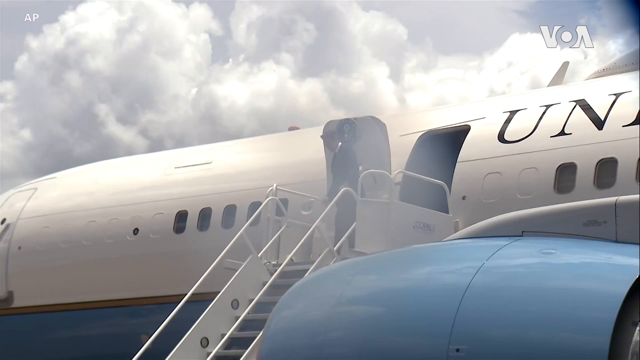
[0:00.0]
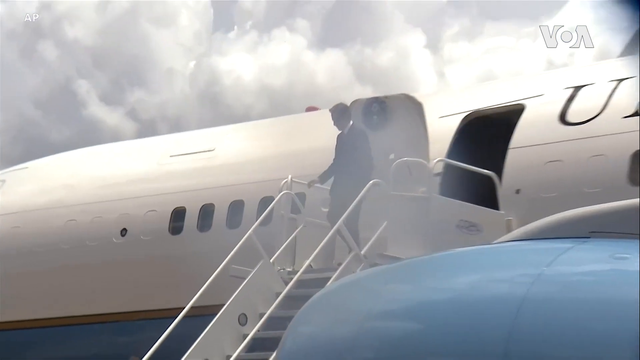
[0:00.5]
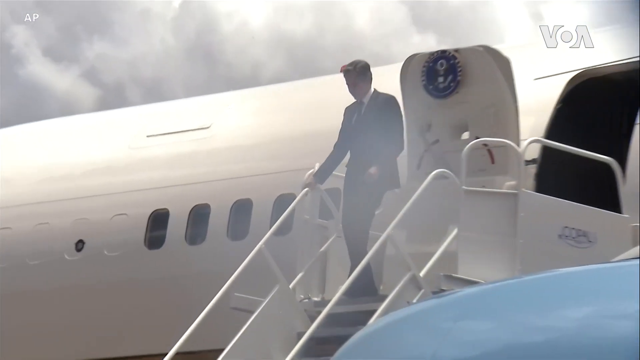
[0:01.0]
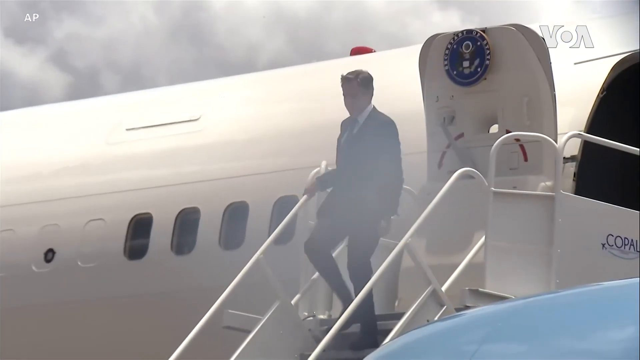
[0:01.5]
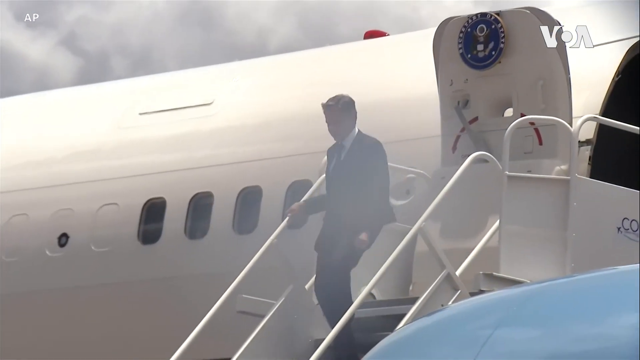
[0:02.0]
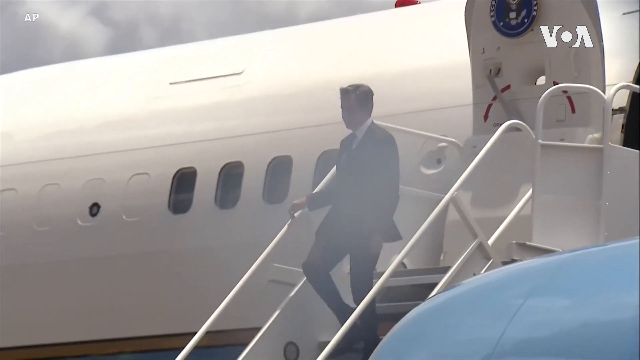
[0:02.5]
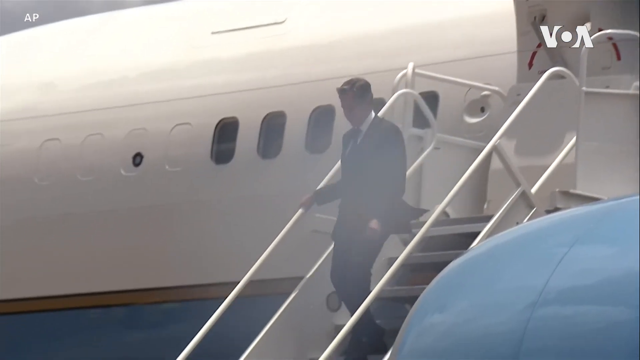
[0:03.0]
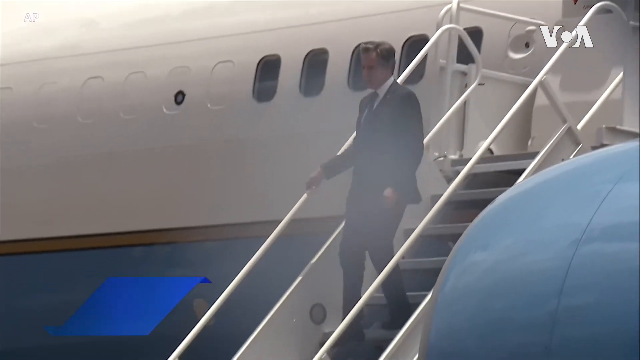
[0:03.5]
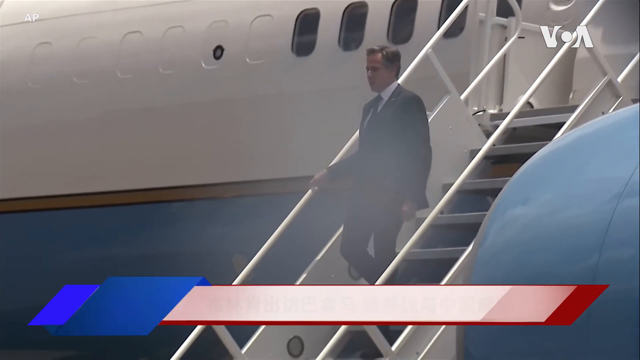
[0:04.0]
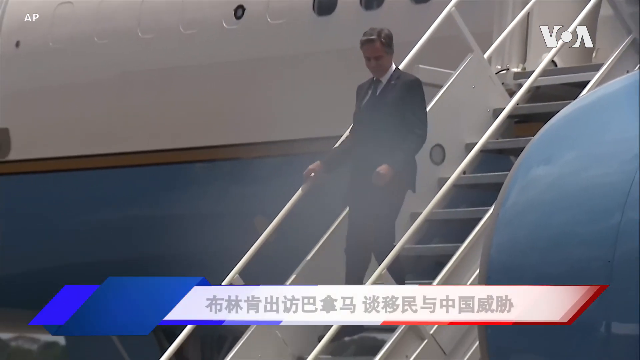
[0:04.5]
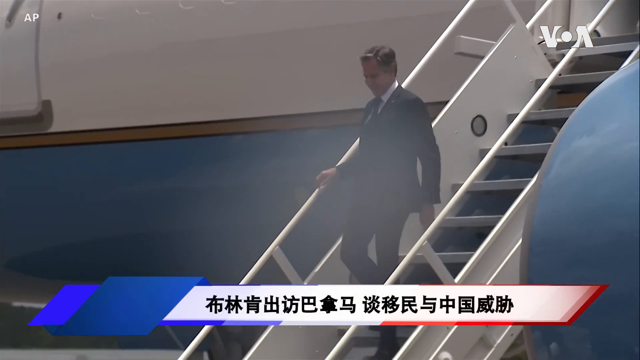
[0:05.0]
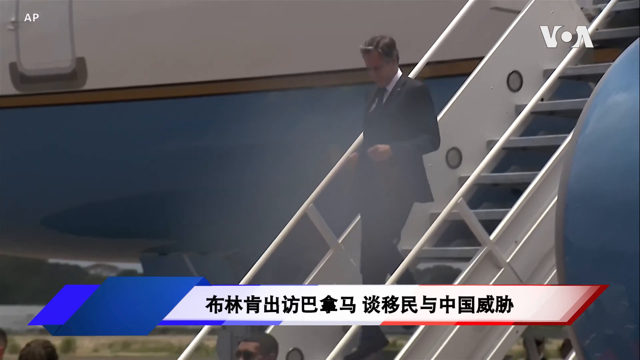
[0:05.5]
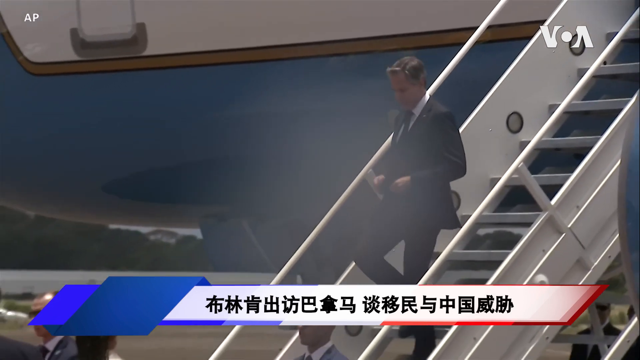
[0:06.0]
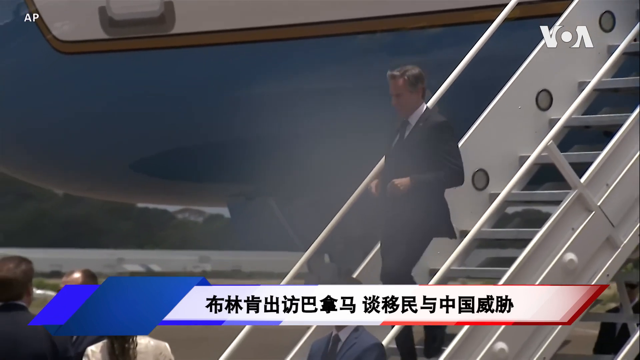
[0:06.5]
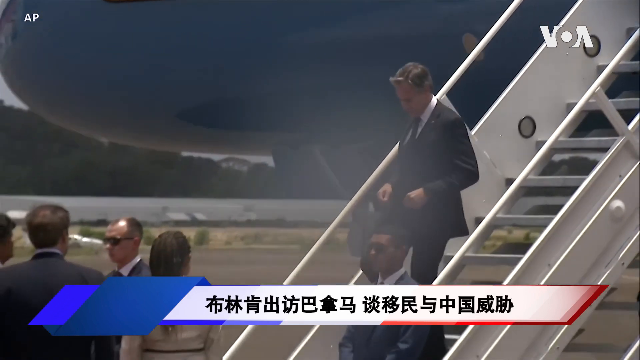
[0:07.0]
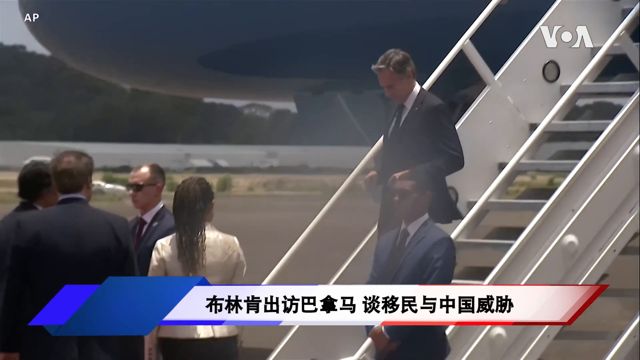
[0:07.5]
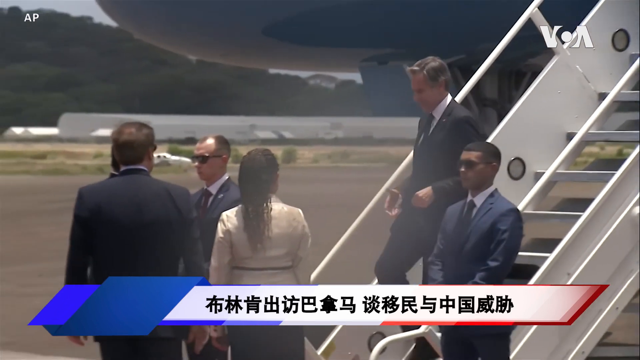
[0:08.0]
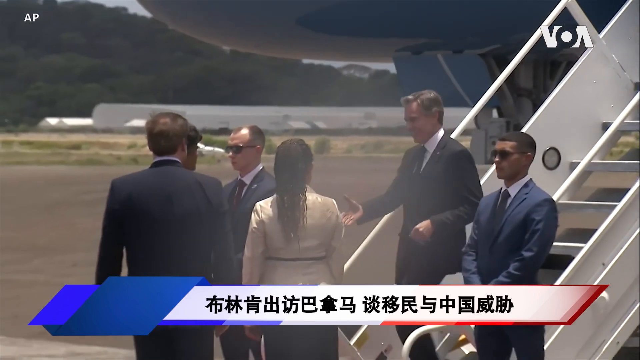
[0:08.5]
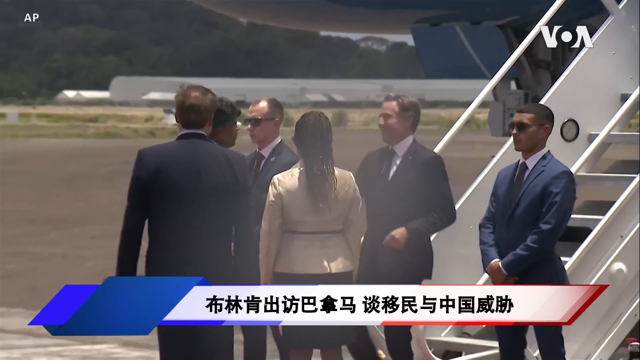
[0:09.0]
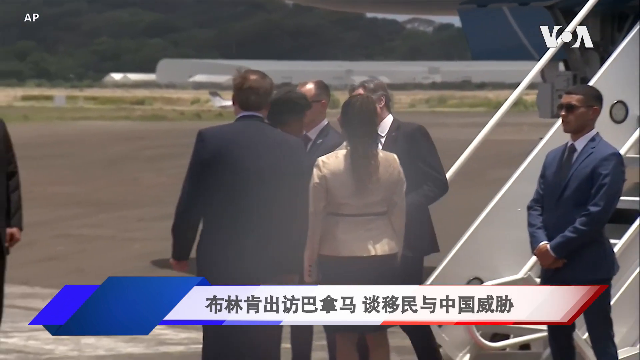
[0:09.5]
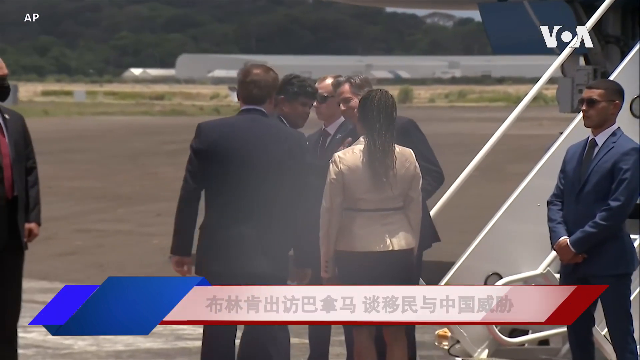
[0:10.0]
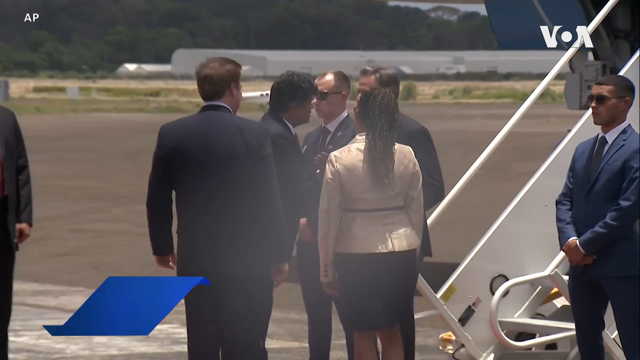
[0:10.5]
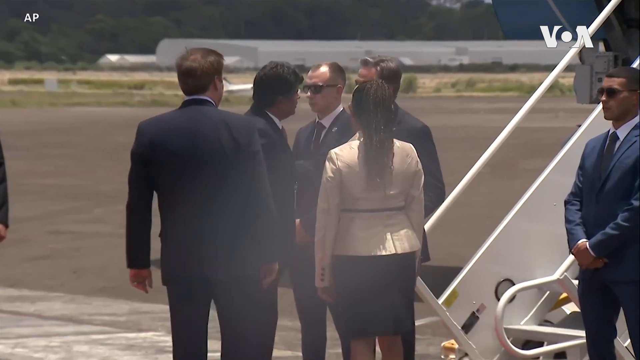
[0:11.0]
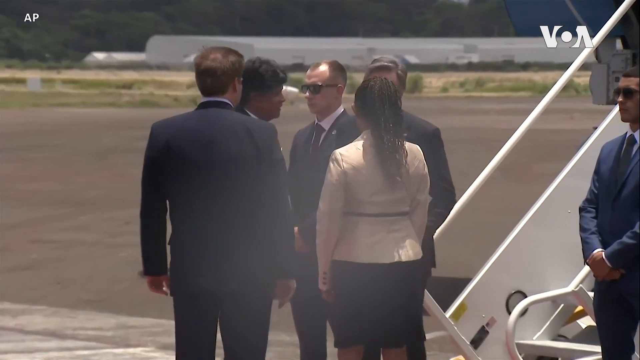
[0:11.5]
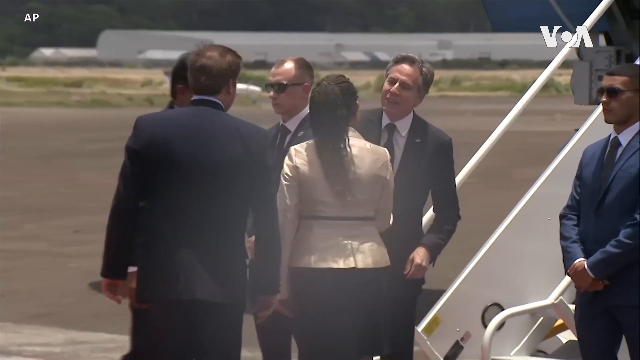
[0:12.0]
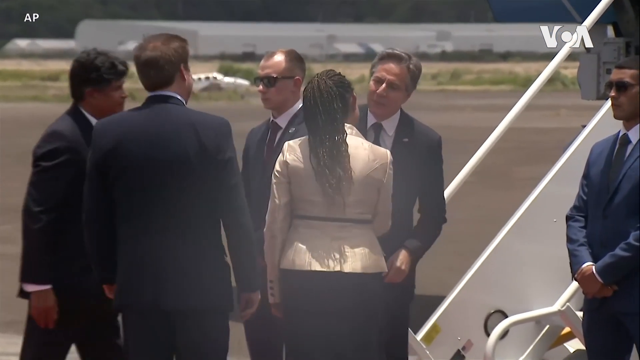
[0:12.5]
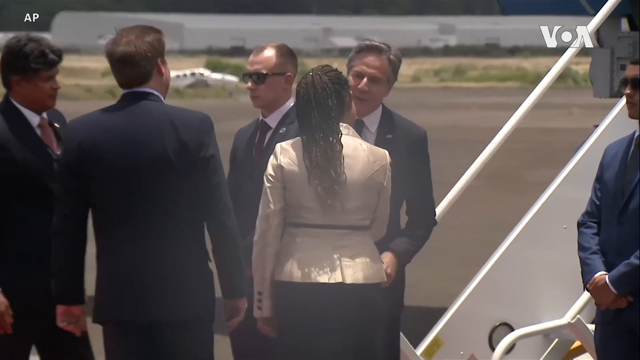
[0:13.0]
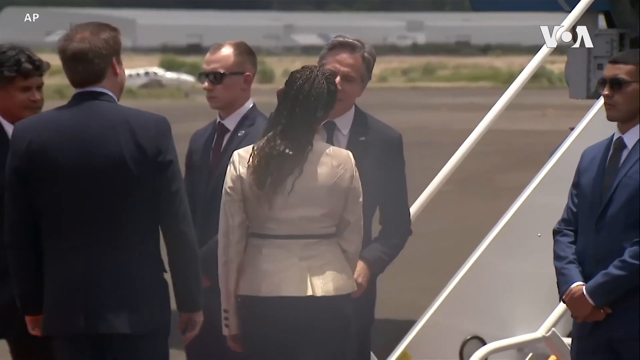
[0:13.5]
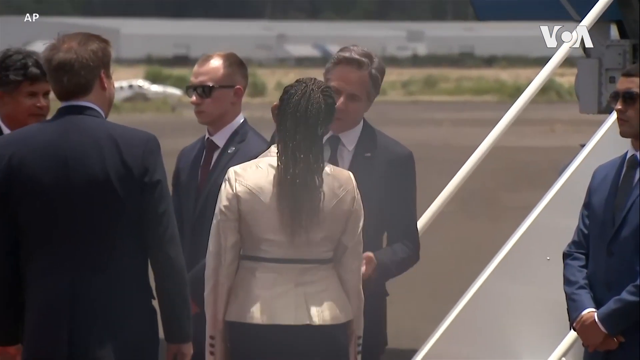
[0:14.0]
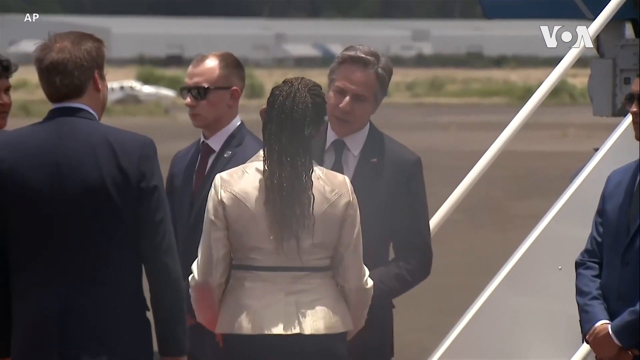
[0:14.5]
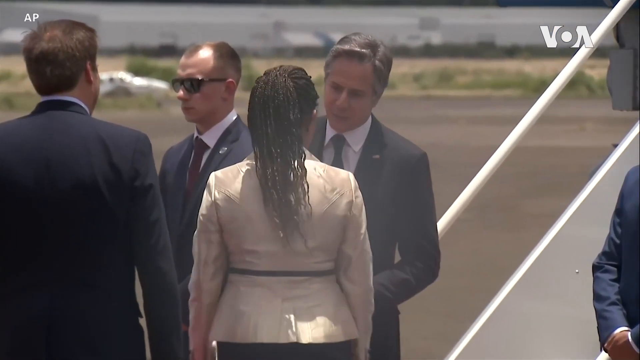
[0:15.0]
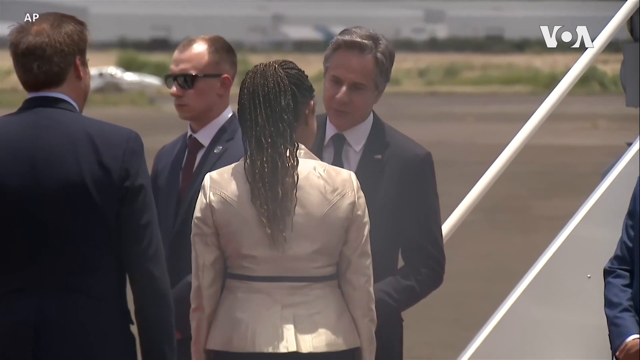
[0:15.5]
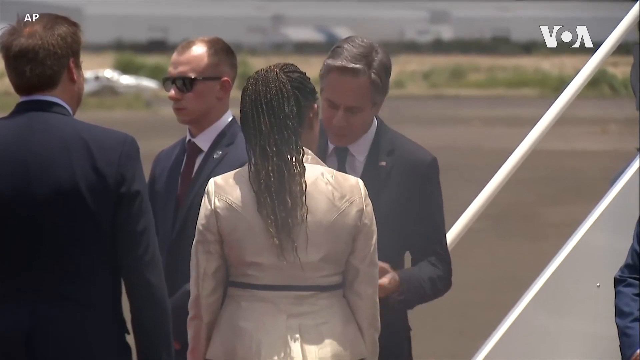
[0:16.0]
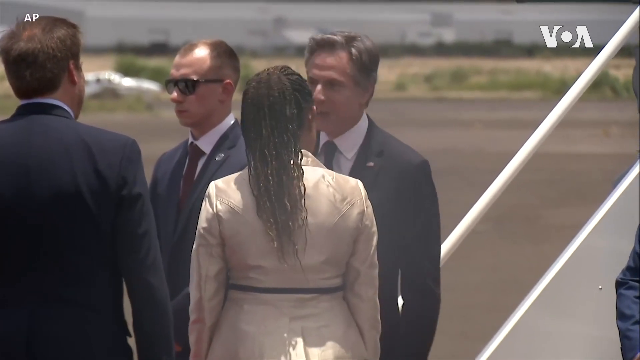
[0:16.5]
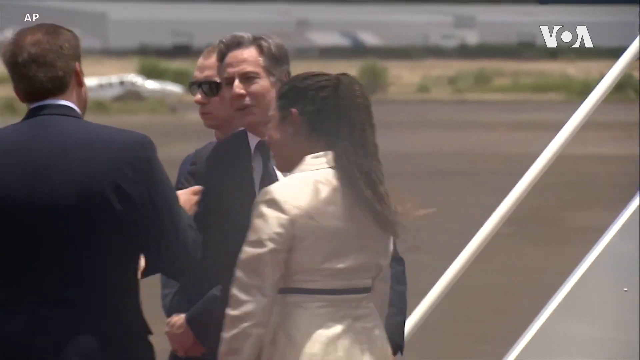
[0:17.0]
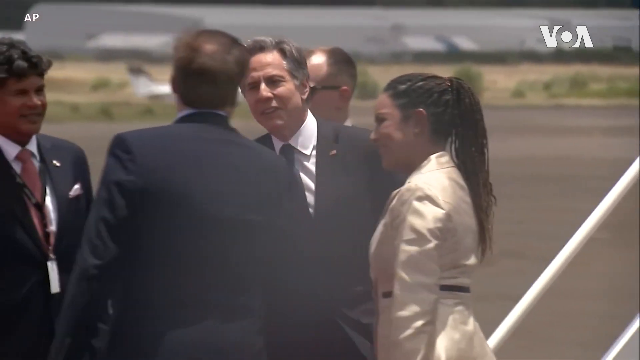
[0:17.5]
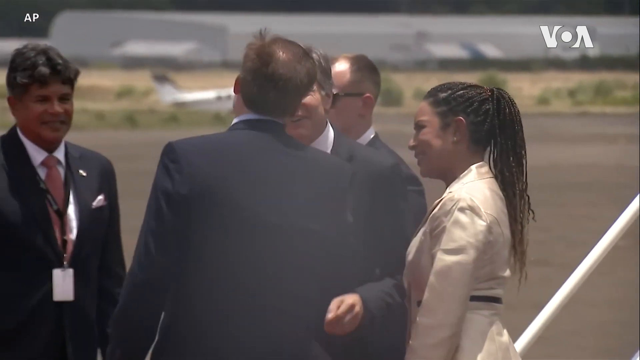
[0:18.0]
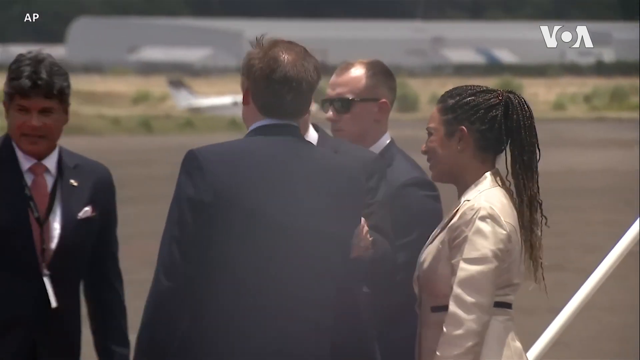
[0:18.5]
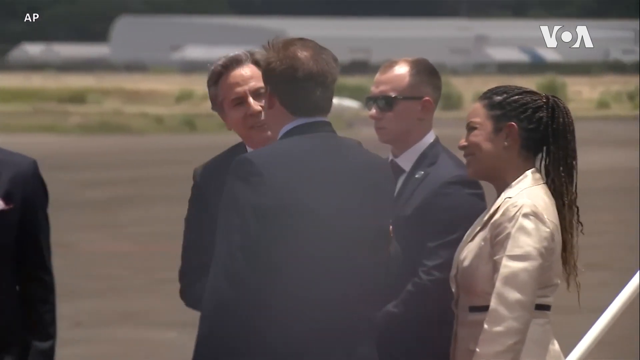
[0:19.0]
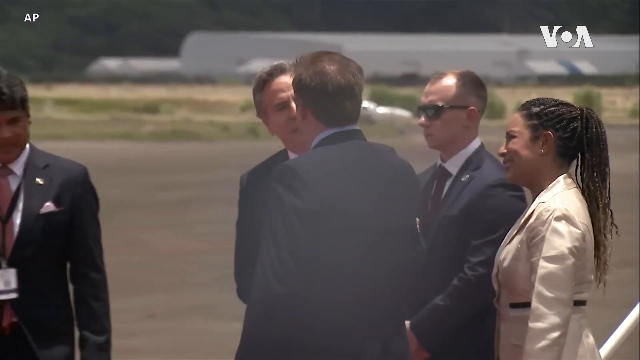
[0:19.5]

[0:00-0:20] A man gets off an airplane wearing a suit, a tie and a white shirt. He looks like a president, but his identity cannot be made out, and the writing visible is in Japanese. As he gets off the plane, he shakes hands with another man. Two secret service agents, both wearing shades, stand next to the bottom of the stairs the man came down. A lady is there as well; she looks like she is African American, has braids, and wears a cream jacket with a skirt. Another man, whose identity cannot be seen, stands behind him. The man from the plane shakes hands with the lady, and they talk to each other as he shakes her hand. He then shakes hands with a Caucasian man, and the two talk and laugh before the man from the plane starts walking with this last gentleman.